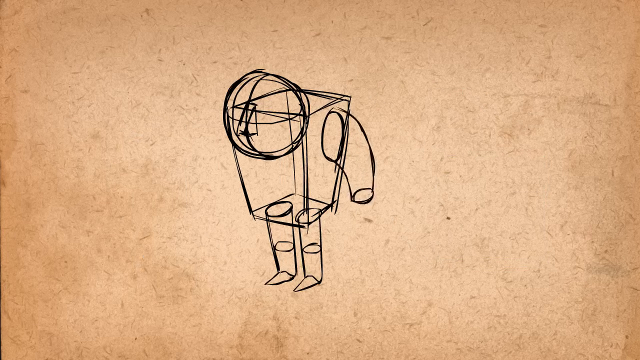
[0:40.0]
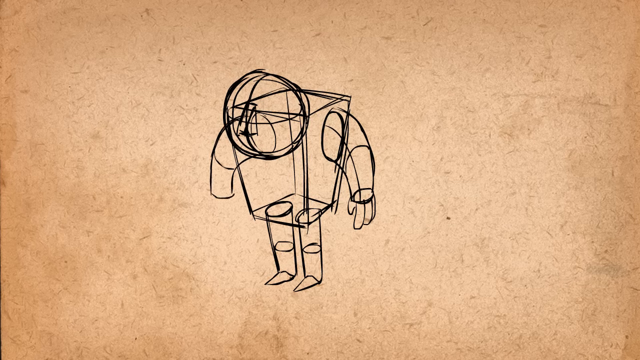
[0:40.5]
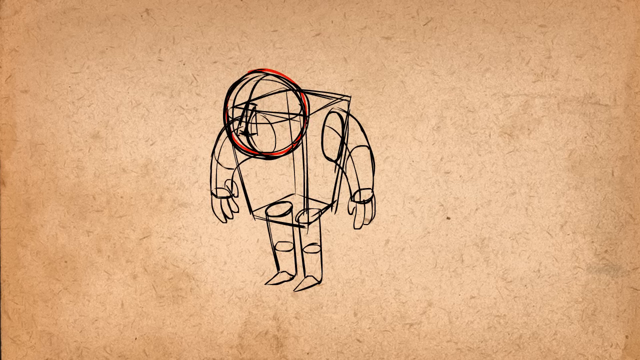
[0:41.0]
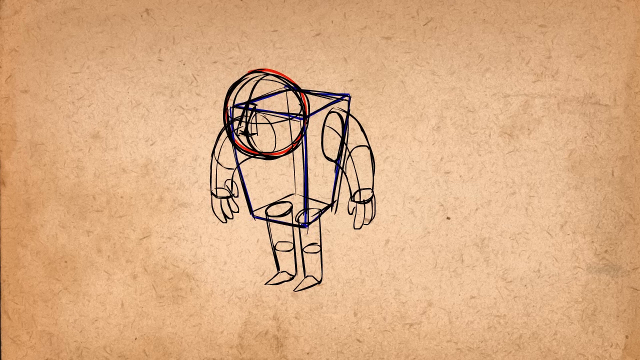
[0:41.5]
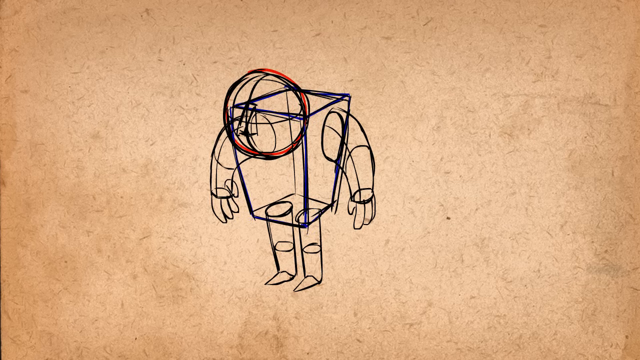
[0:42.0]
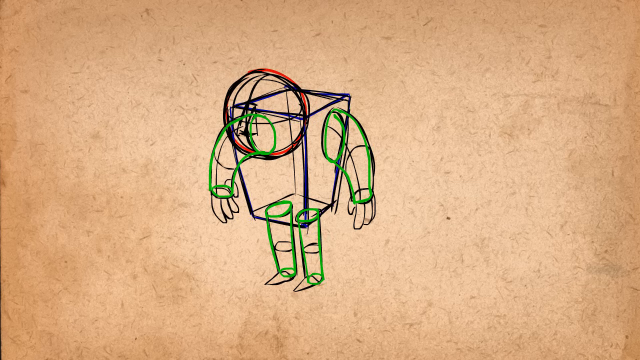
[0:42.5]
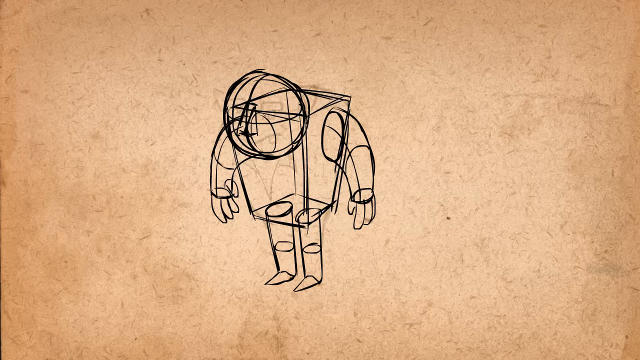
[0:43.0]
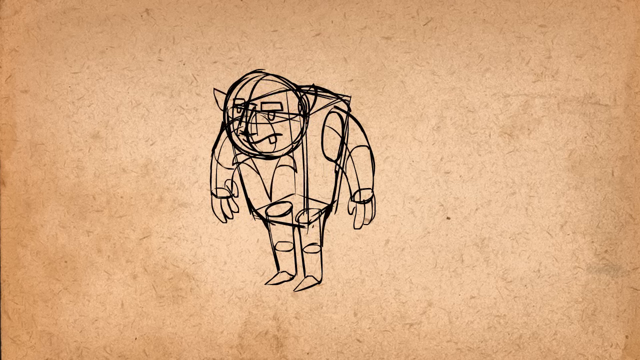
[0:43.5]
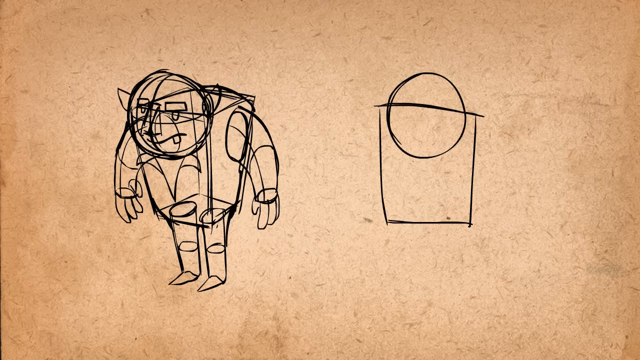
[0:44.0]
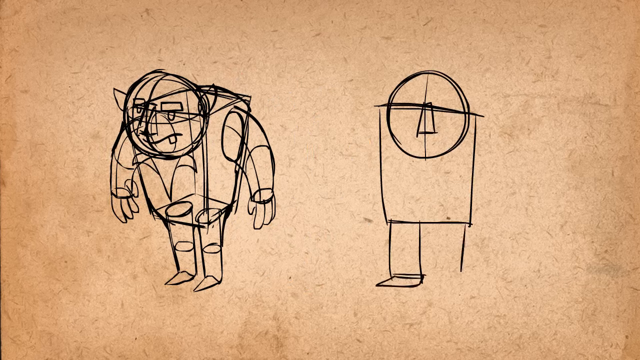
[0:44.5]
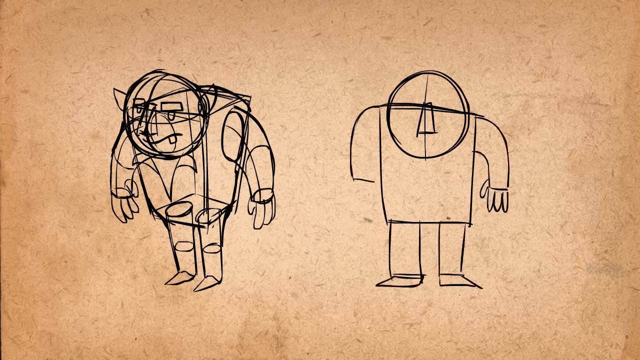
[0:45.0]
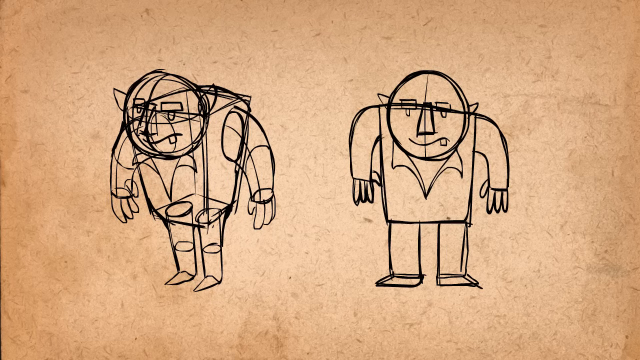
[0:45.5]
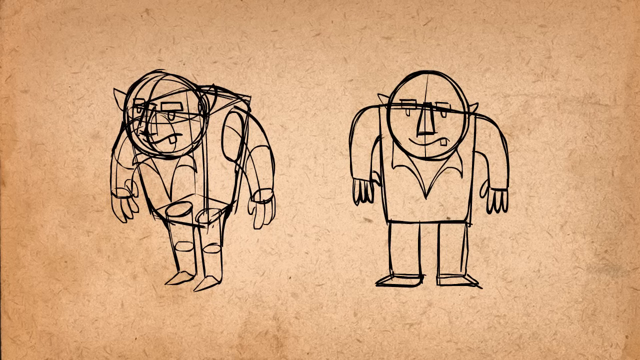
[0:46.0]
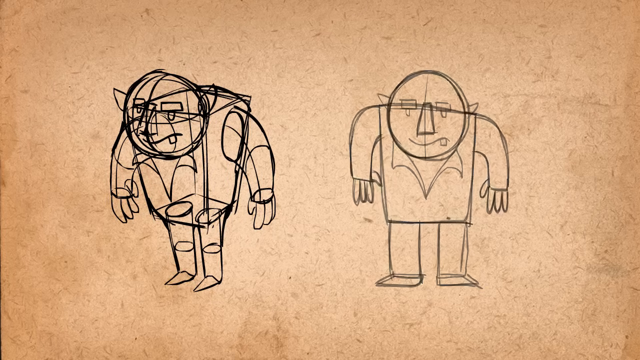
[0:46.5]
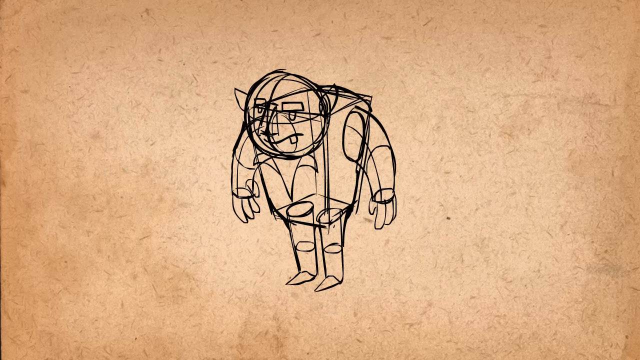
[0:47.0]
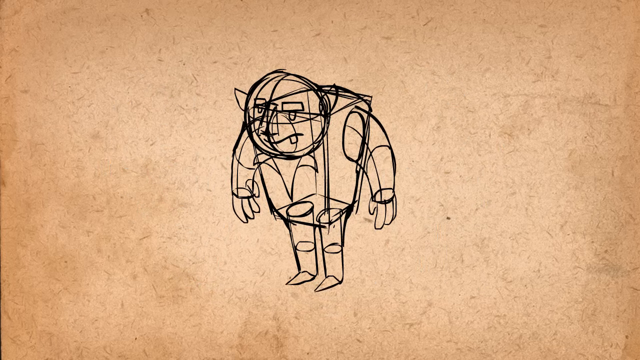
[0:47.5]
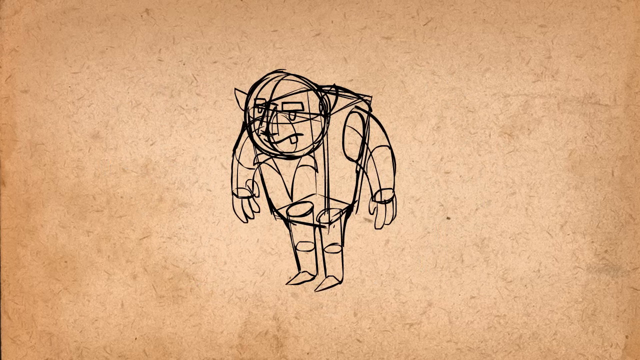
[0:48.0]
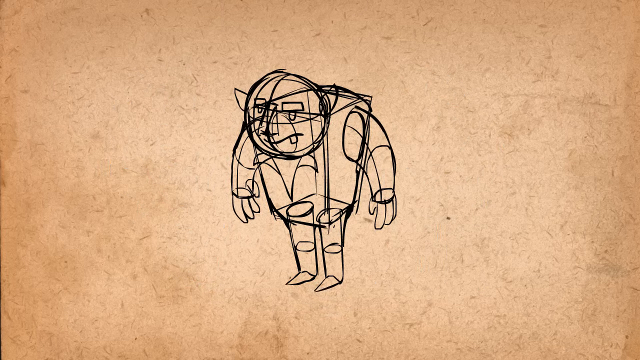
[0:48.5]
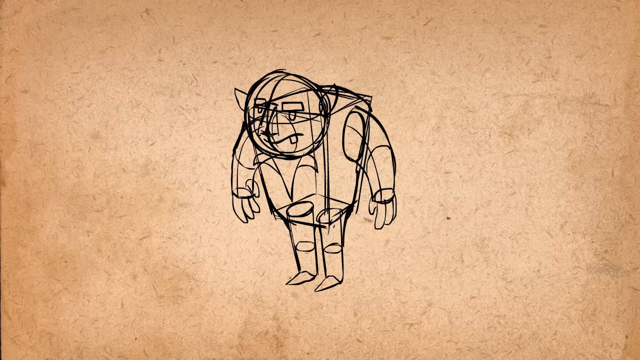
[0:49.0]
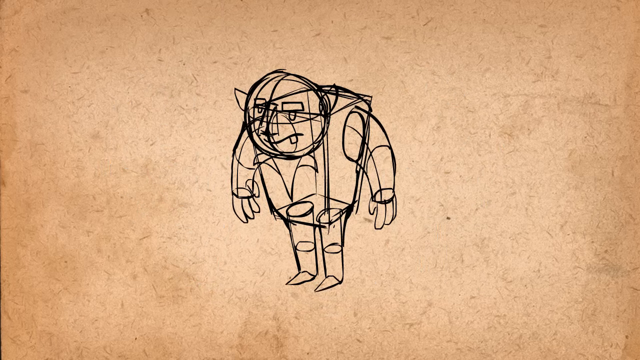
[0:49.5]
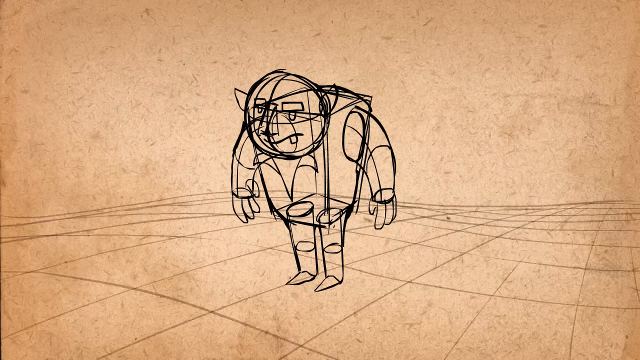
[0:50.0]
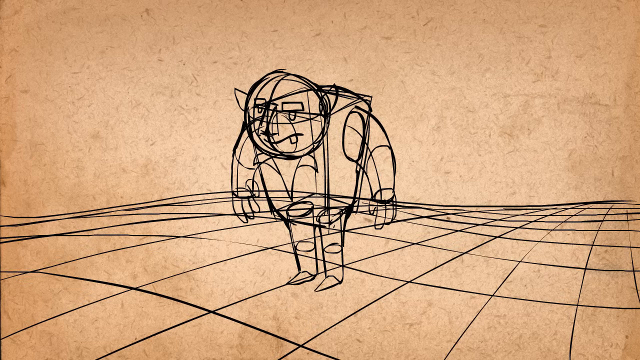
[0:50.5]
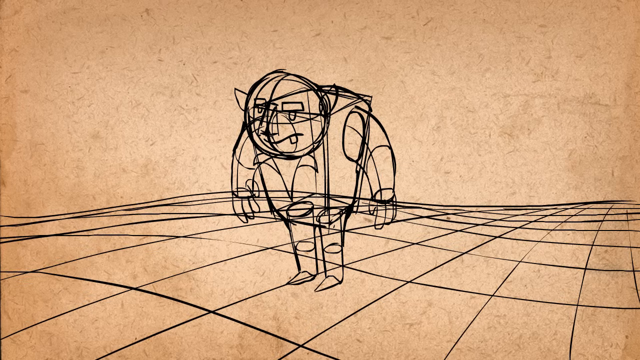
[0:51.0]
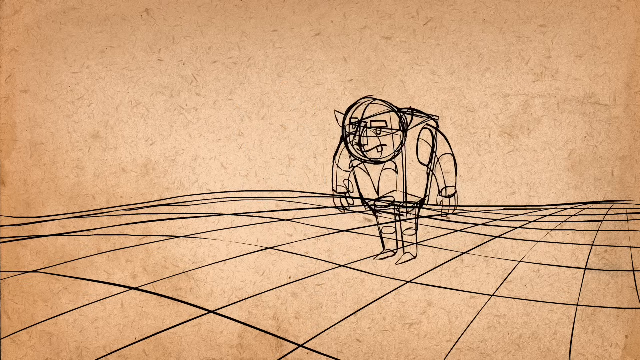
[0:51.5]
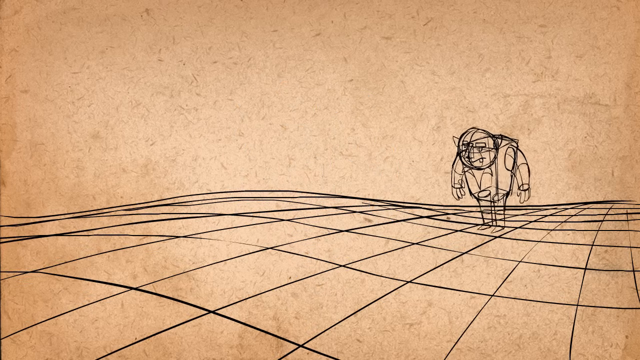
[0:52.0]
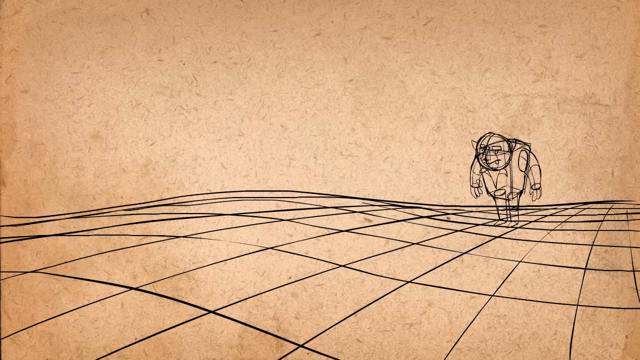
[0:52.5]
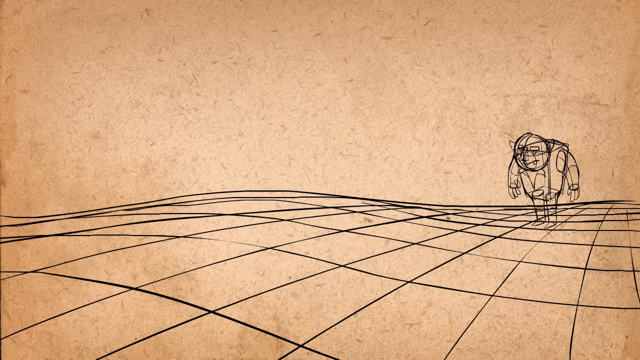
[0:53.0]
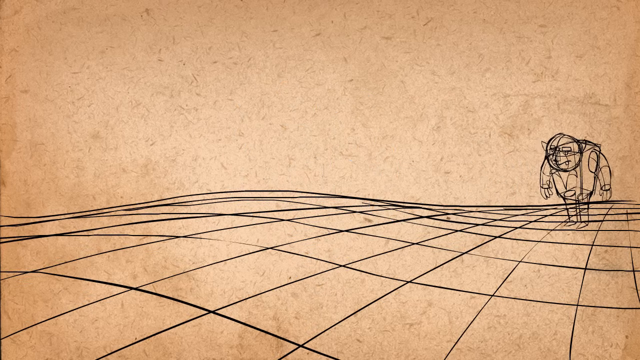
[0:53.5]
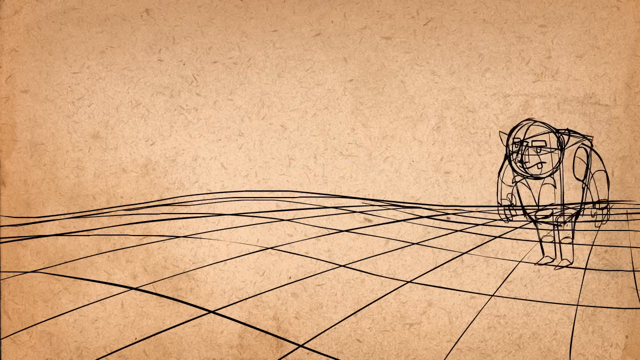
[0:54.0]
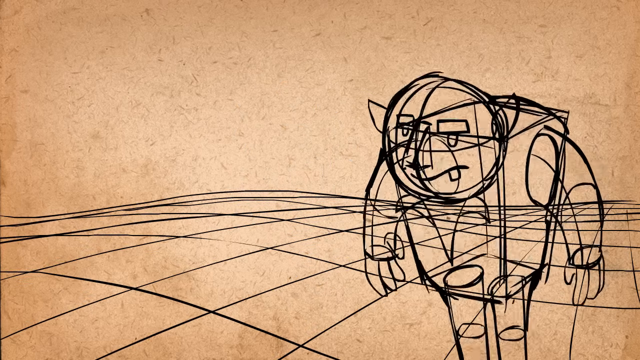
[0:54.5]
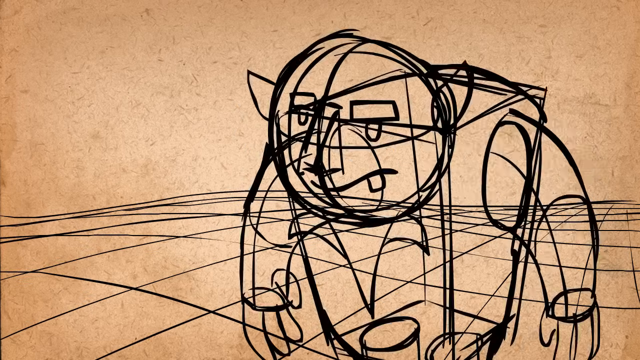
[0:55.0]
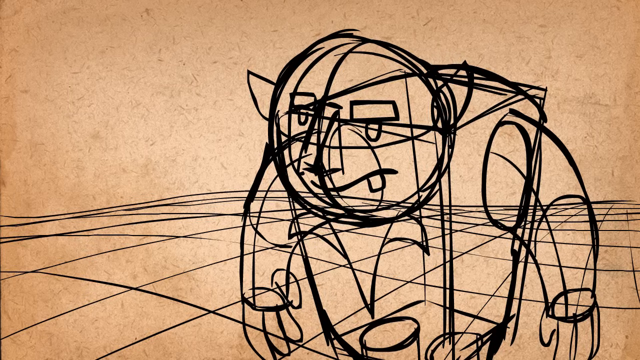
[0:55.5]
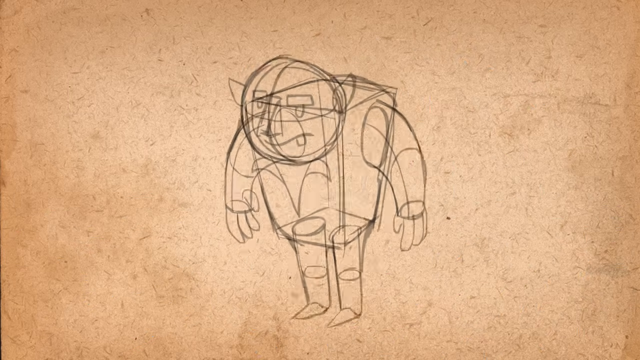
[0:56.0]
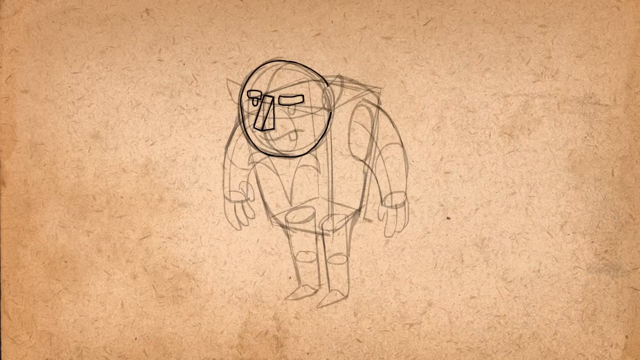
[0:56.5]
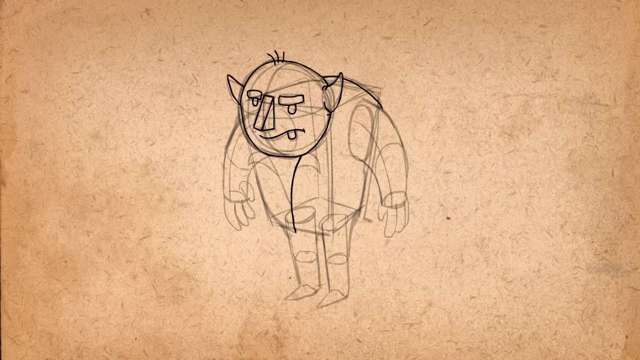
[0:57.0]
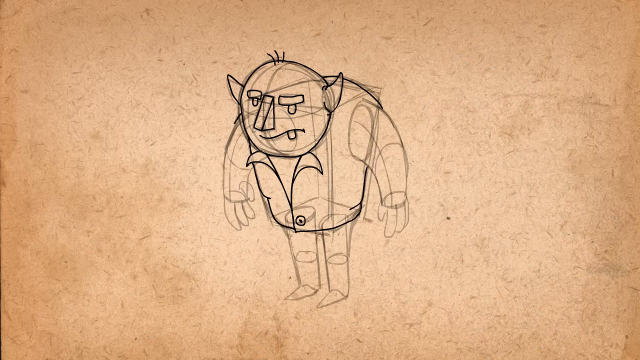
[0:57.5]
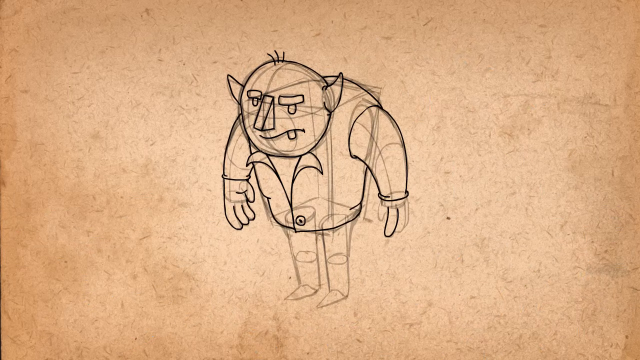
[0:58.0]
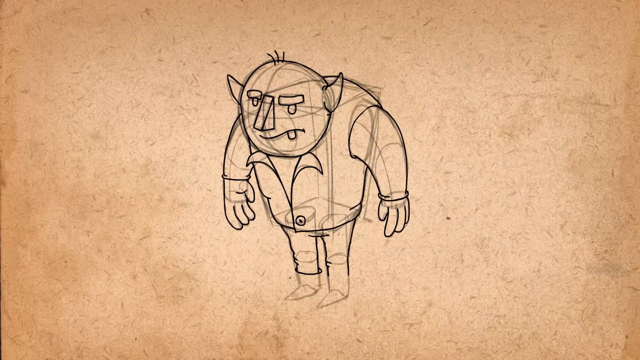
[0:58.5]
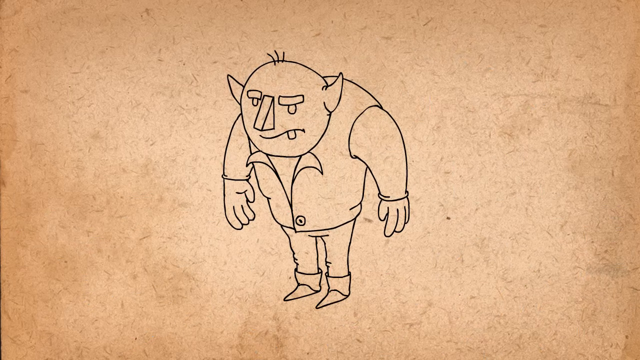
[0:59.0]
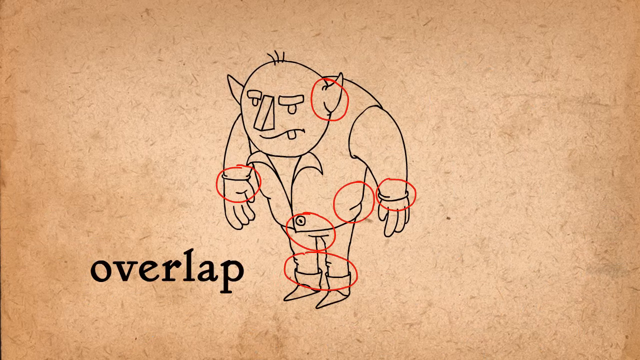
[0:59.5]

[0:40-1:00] In the solid drawing section, number 11 of "The 12 Principles of Animation" by Frank Thomas and Ollie Johnson, a hunchbacked creature that looks like a ghoul or a gremlin is built up from cubes and circles, showing its three-dimensional aspect. Wavy hills with grids that come forth give a three-dimensional look and a sense of depth. Lines are moved and drawn.